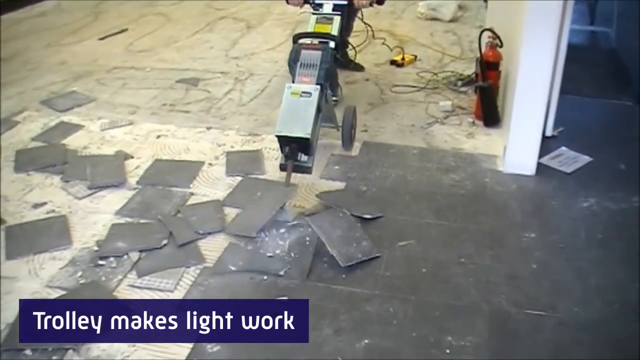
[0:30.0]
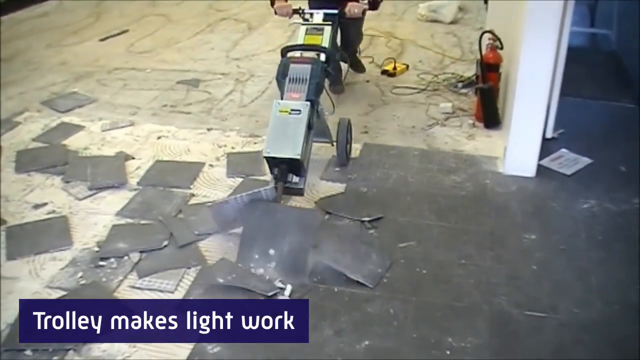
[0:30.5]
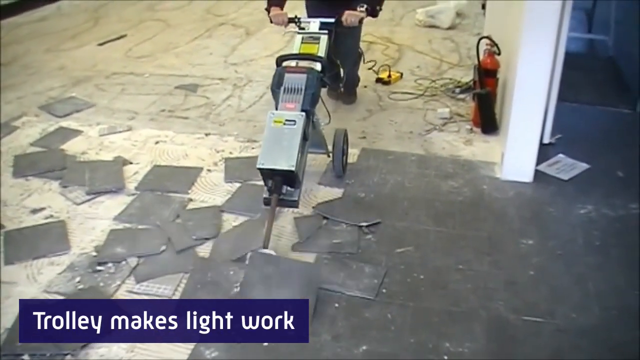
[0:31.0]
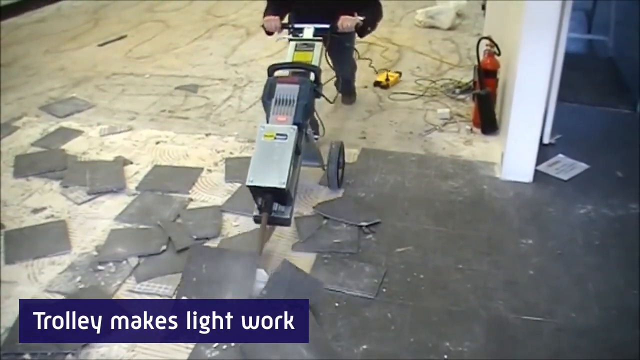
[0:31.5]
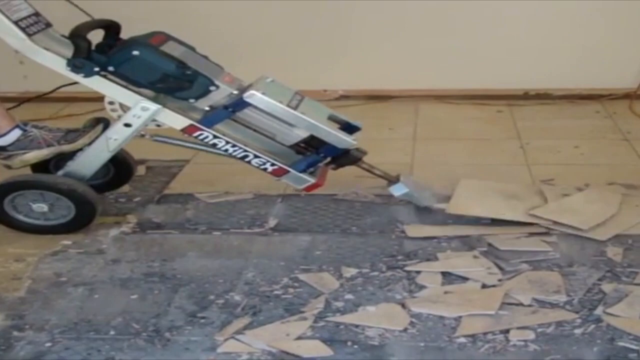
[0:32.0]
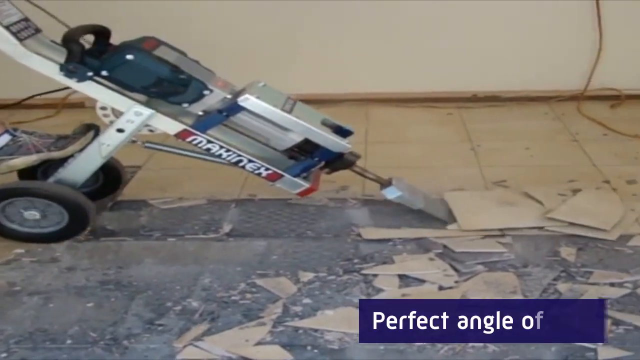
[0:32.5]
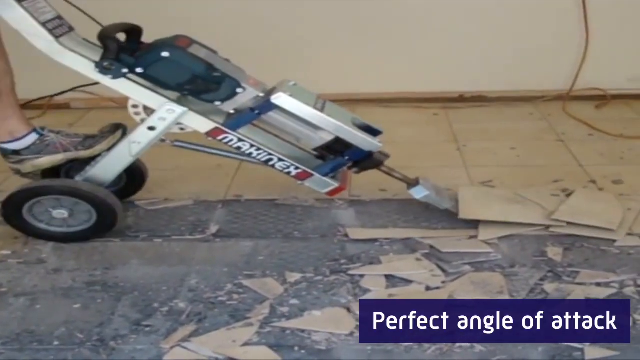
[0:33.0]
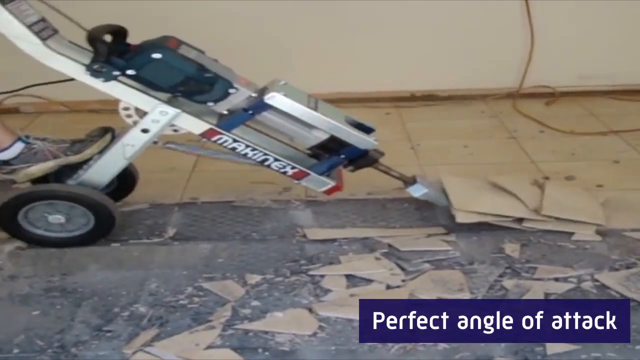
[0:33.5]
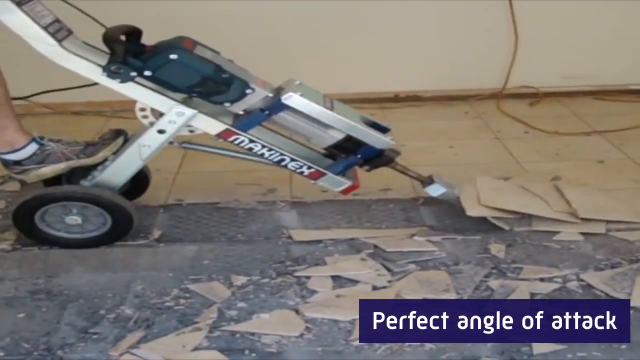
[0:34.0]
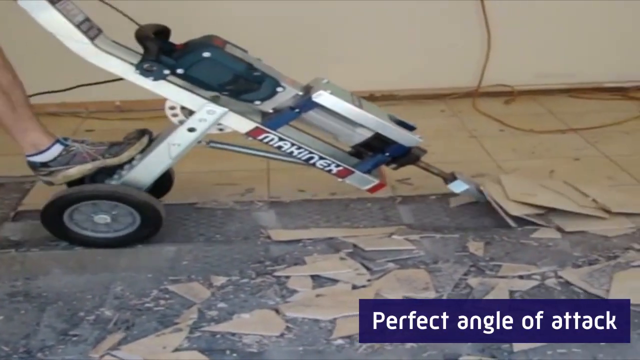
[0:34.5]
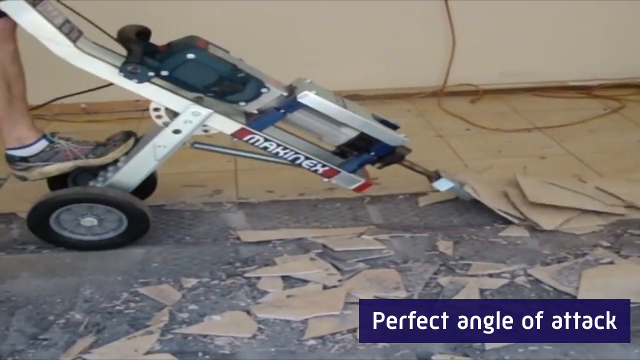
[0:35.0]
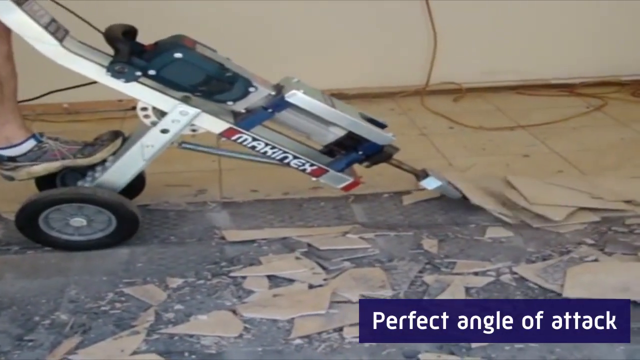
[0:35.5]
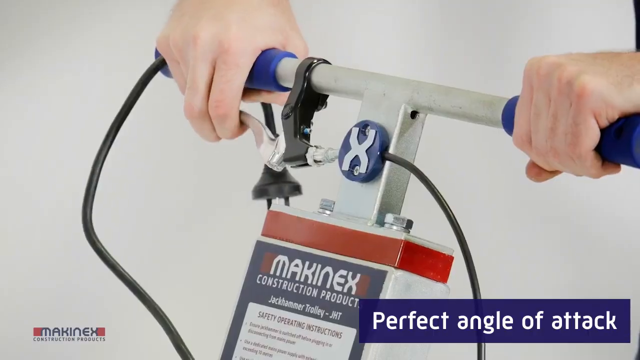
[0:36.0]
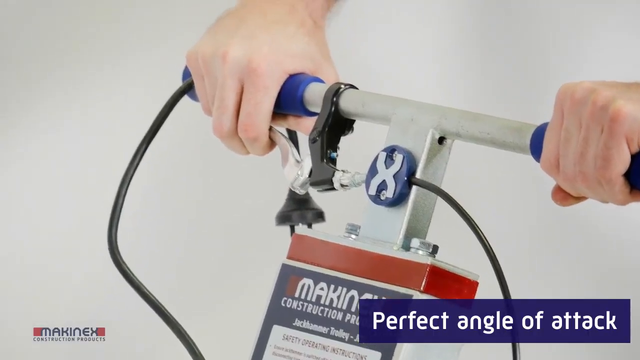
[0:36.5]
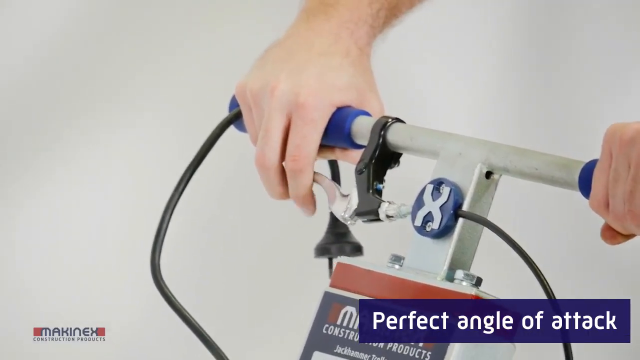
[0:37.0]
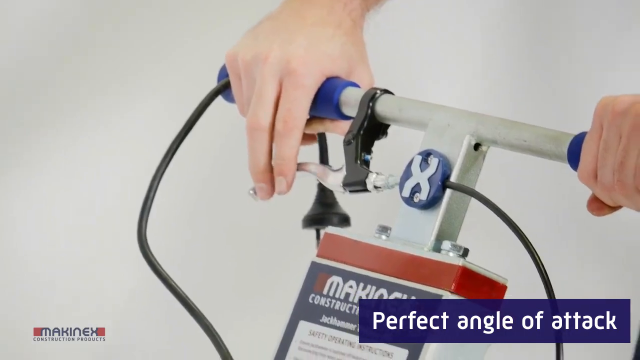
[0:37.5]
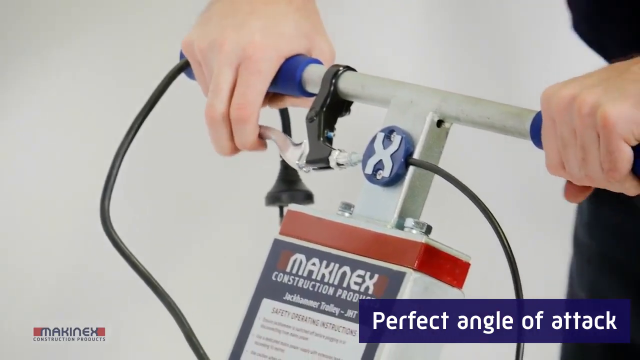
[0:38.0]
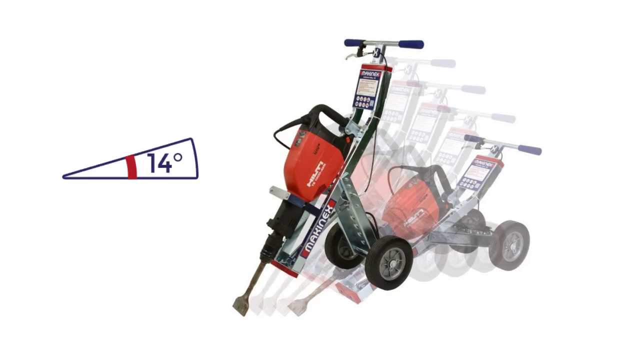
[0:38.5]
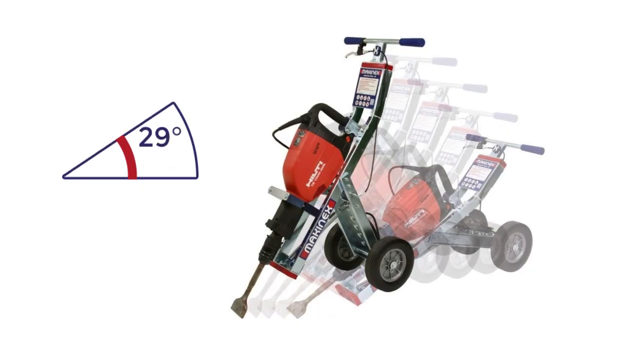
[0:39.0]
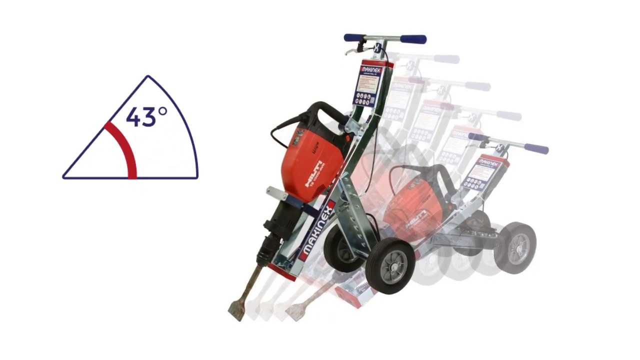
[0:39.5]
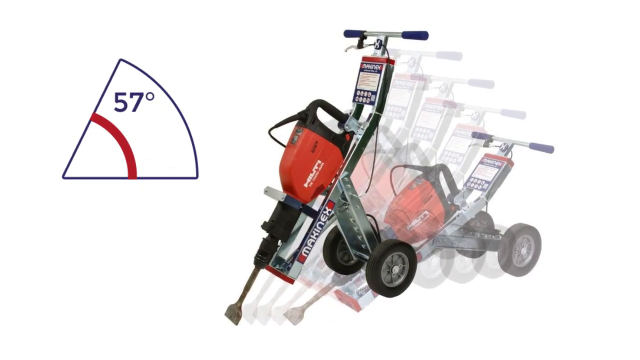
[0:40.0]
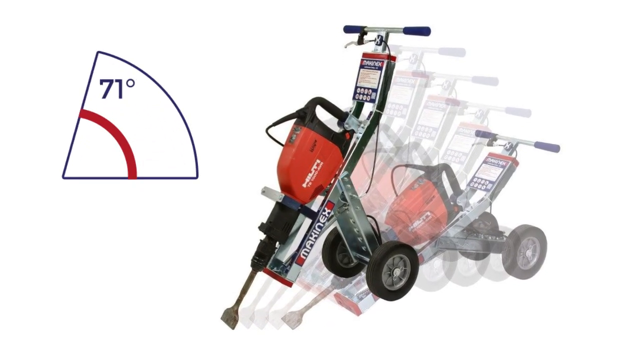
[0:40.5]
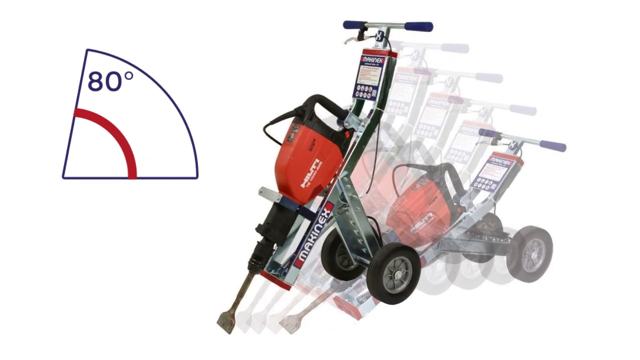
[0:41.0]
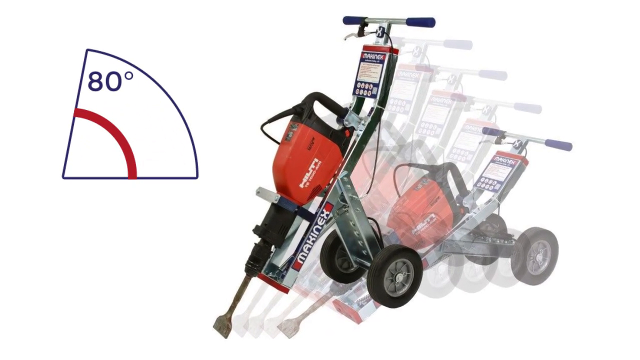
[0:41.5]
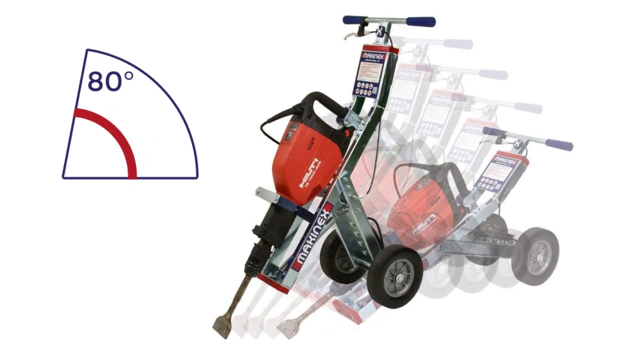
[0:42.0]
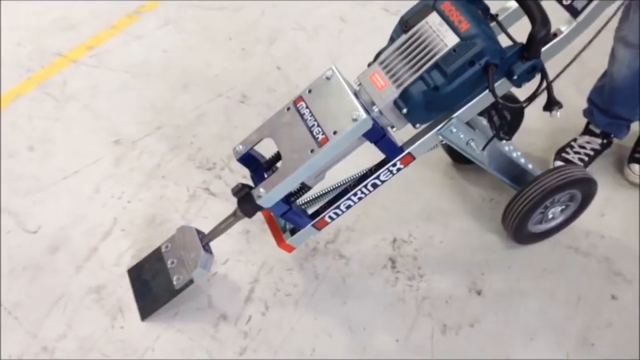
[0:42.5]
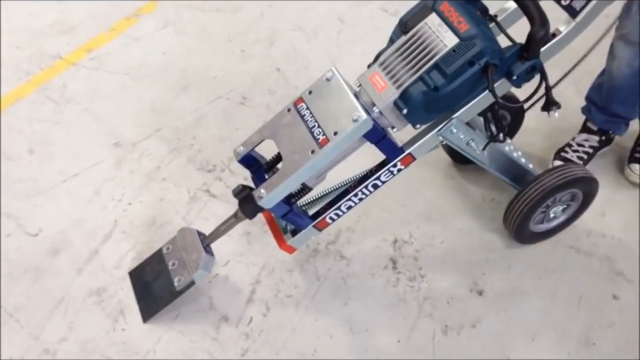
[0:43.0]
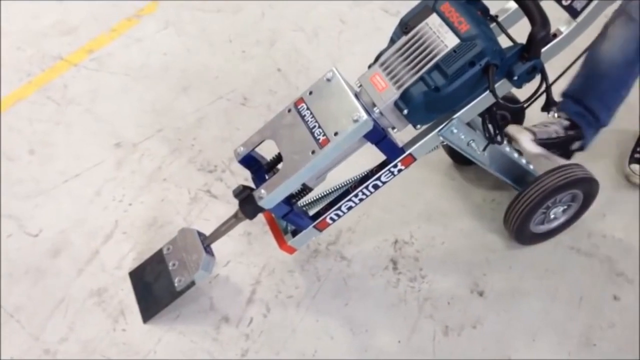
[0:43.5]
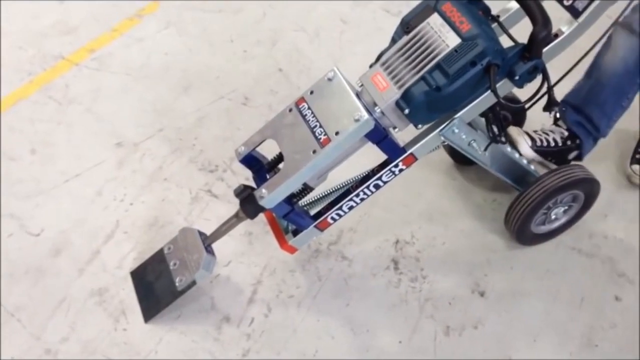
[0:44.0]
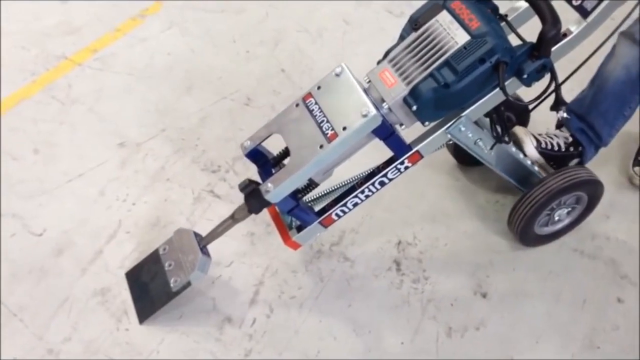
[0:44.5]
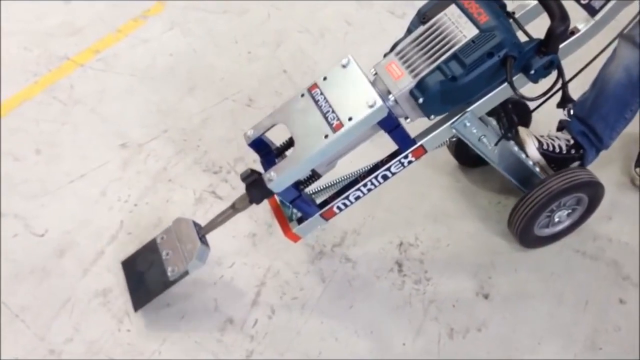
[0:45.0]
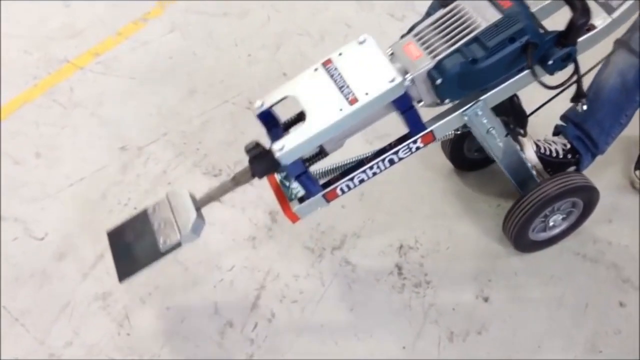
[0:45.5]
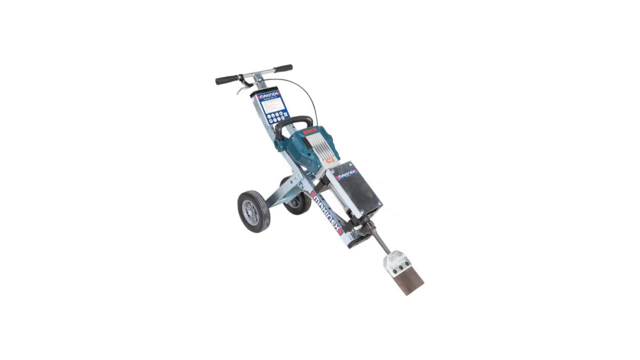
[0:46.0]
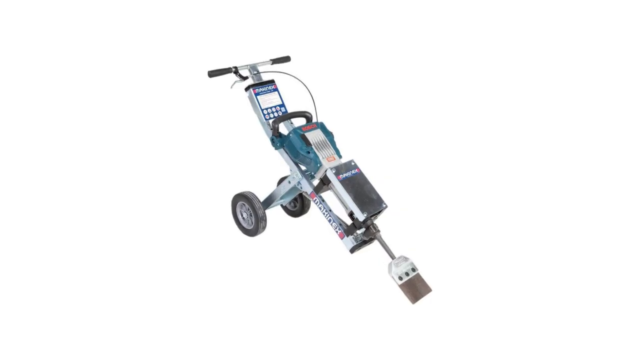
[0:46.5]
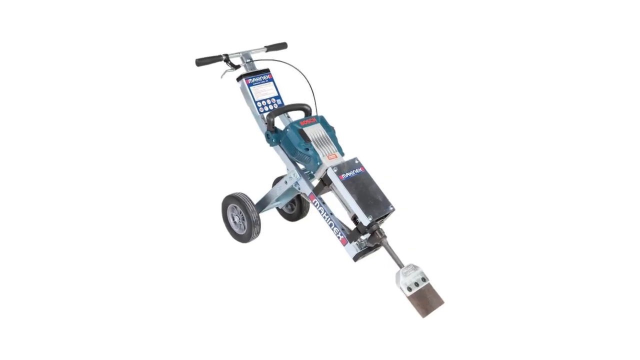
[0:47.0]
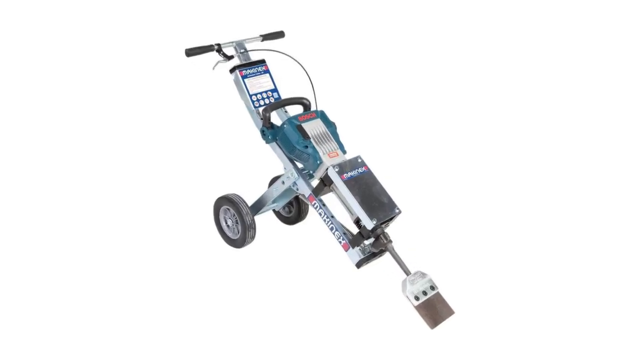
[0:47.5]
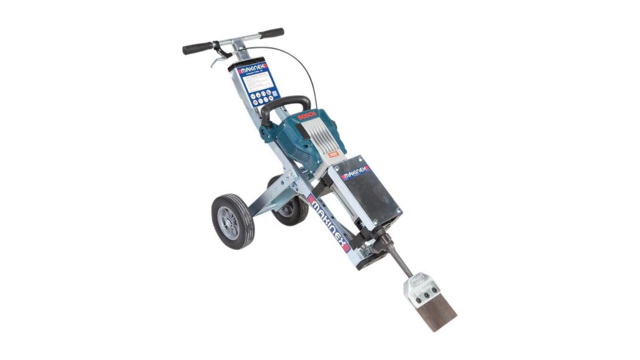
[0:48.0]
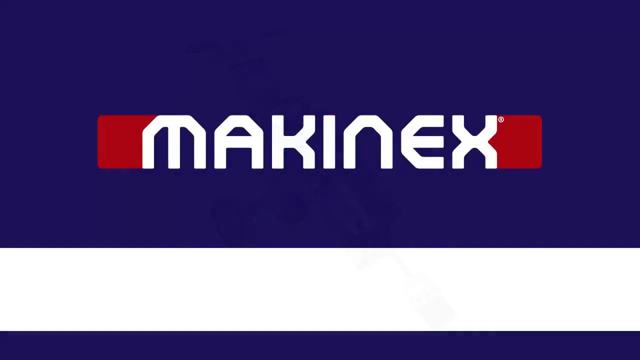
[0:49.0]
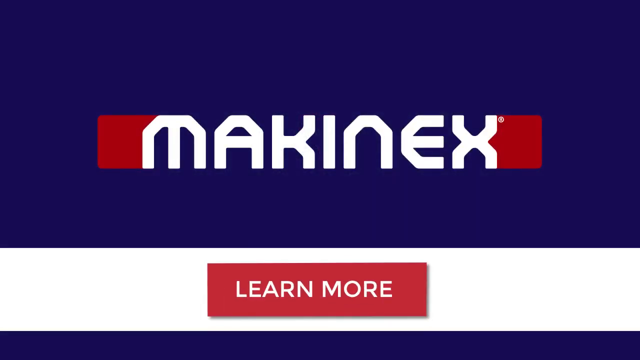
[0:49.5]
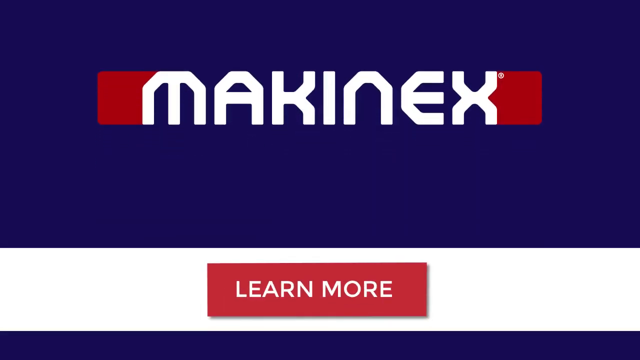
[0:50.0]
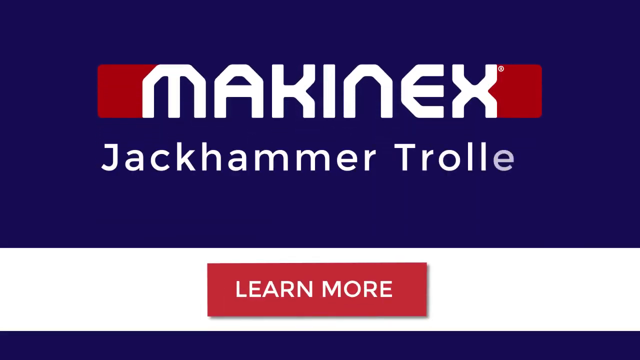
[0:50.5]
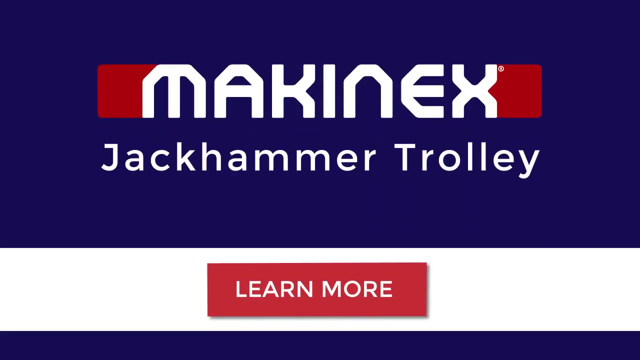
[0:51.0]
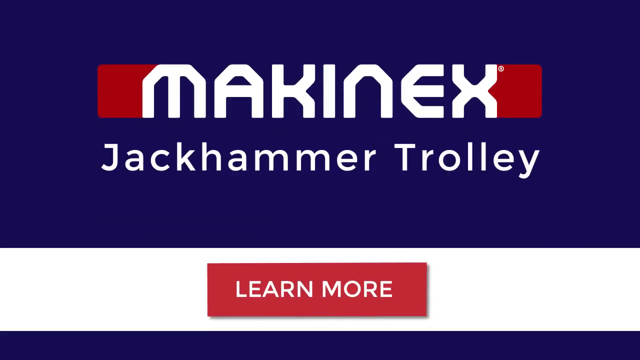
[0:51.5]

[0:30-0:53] A man in gray pants uses his foot to handle the trolley machine while holding its handles with both hands, drilling outside. The machine has a black cord and blue handles, is orange and red, and has "MAKNIX" written on it. It has three wheels, one at the front and two at the back, and at the front there is a spade that digs up and removes the tiles. "77 degrees Celsius" is written on it. The foot is placed on the machine to lift it so that it starts working.